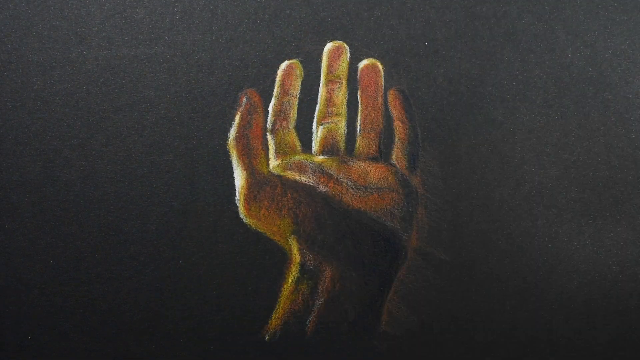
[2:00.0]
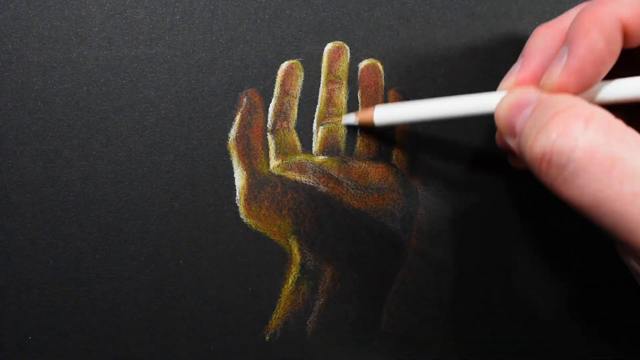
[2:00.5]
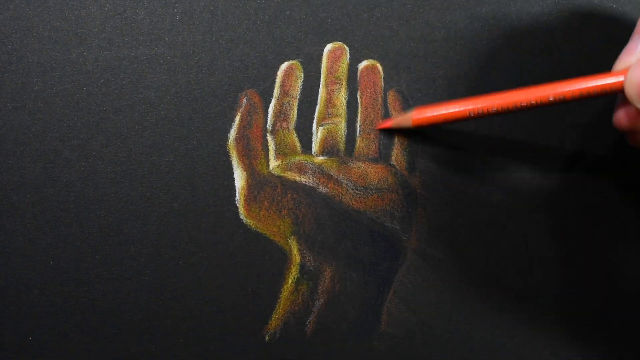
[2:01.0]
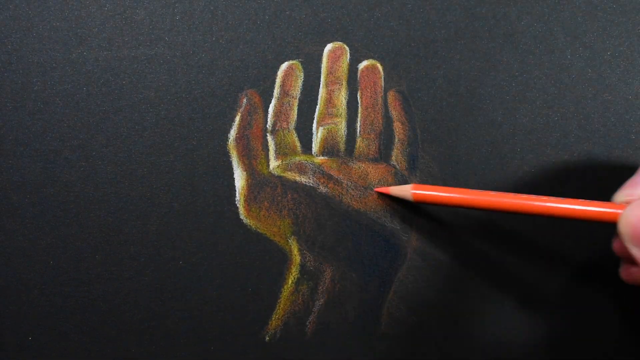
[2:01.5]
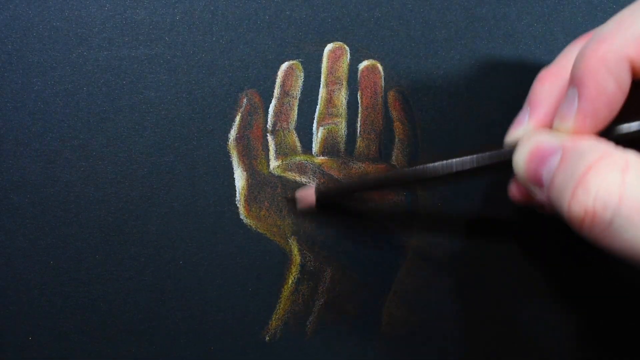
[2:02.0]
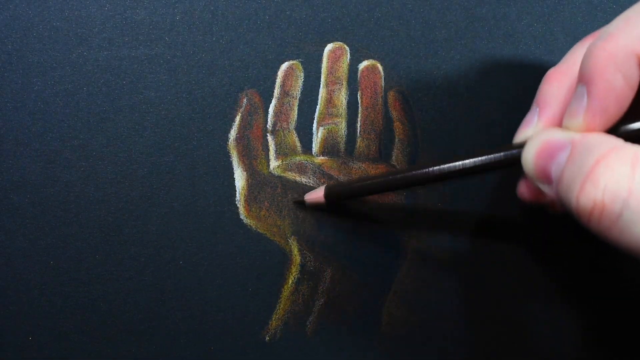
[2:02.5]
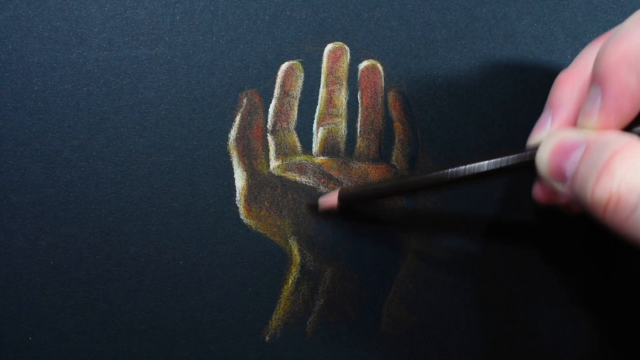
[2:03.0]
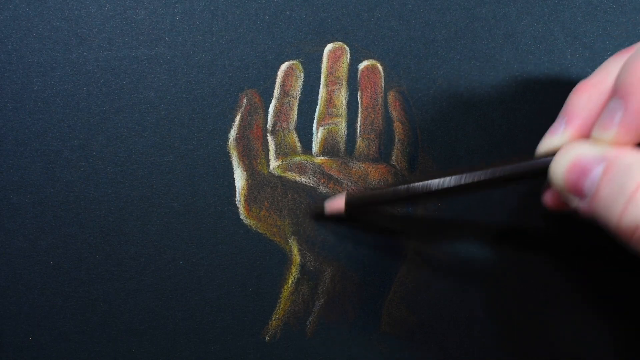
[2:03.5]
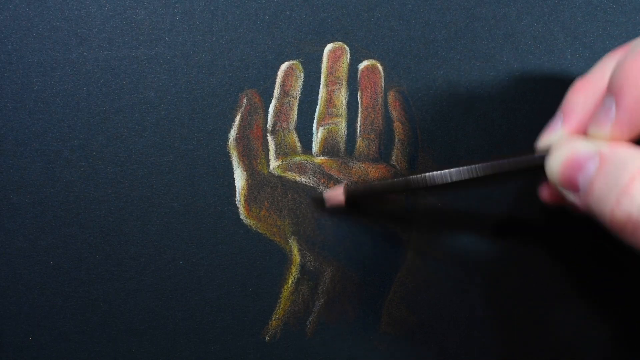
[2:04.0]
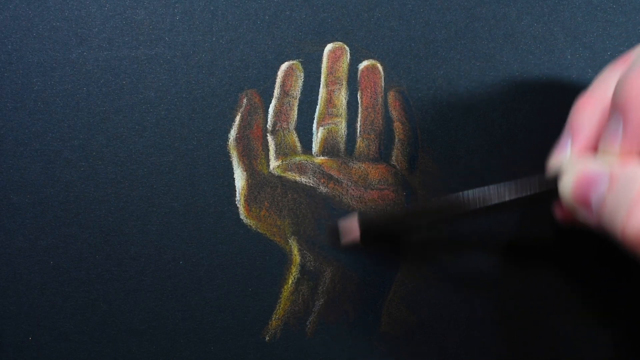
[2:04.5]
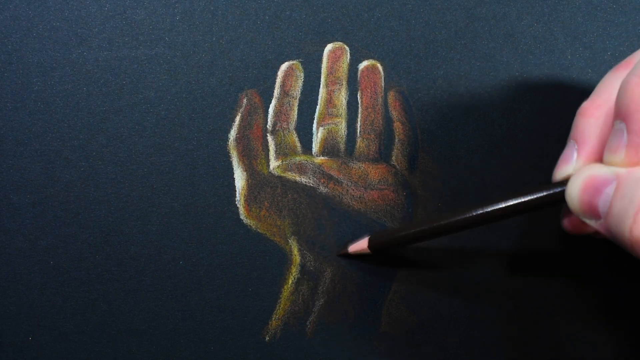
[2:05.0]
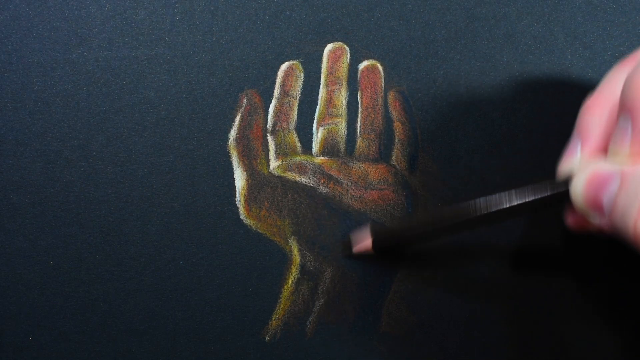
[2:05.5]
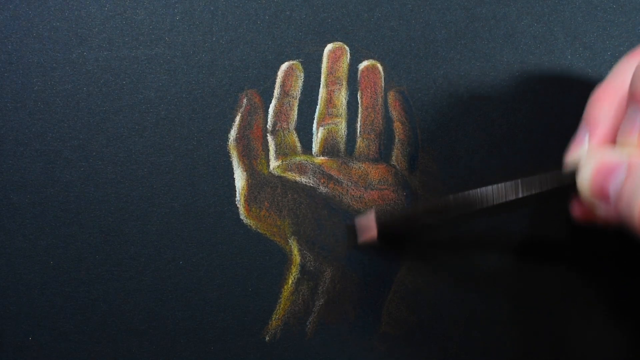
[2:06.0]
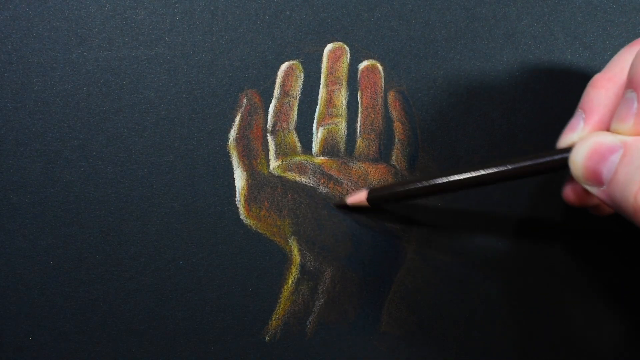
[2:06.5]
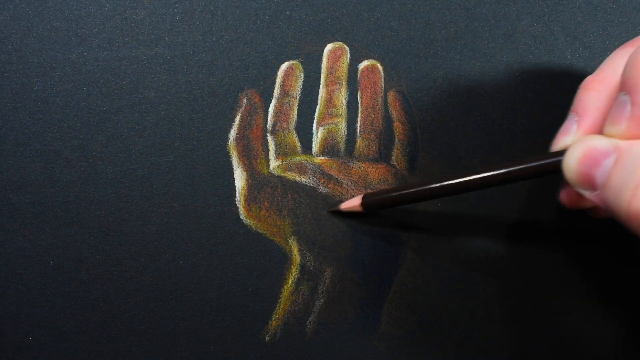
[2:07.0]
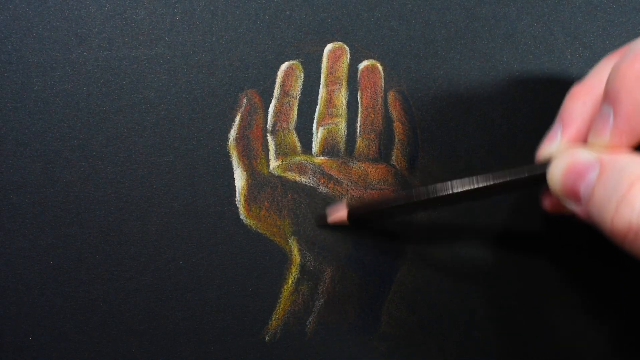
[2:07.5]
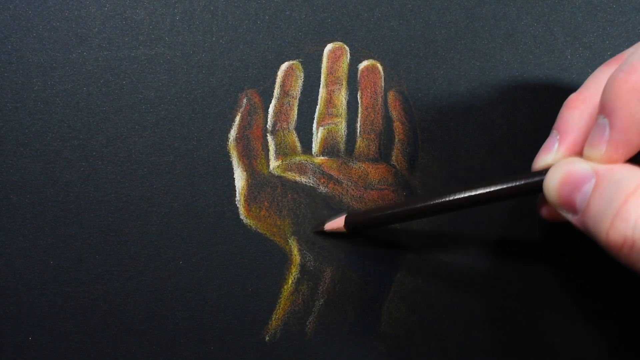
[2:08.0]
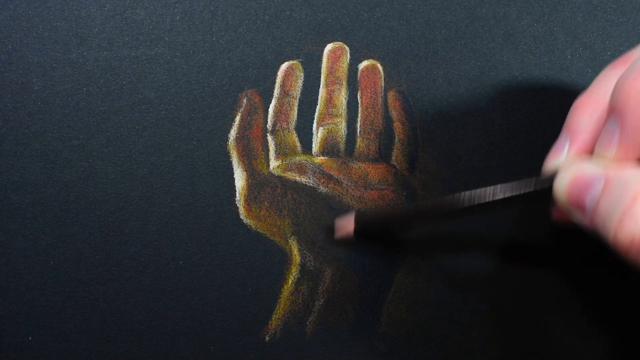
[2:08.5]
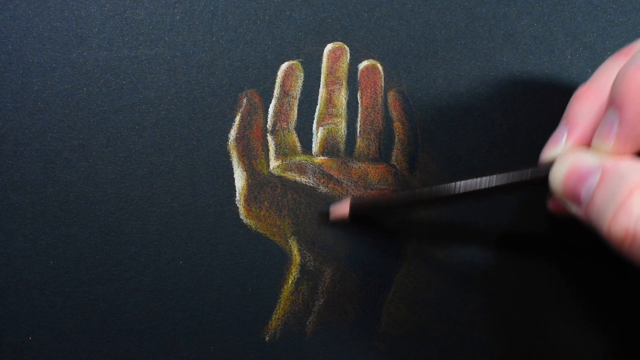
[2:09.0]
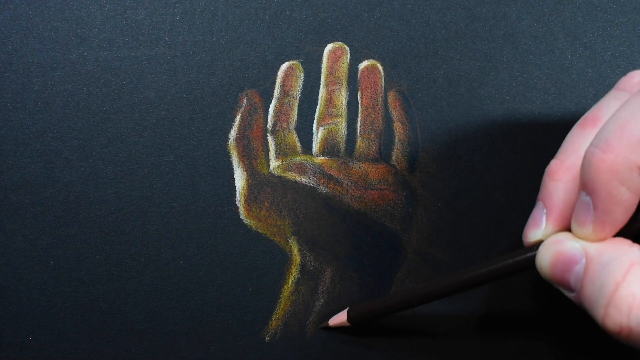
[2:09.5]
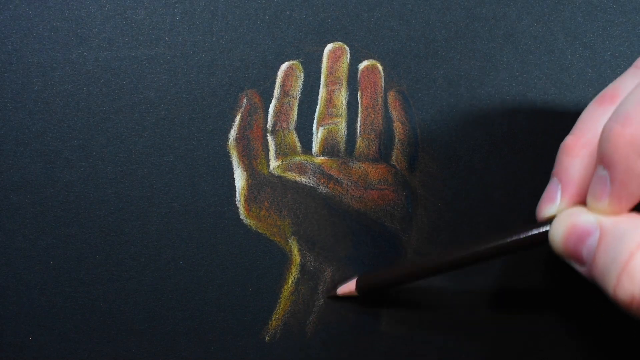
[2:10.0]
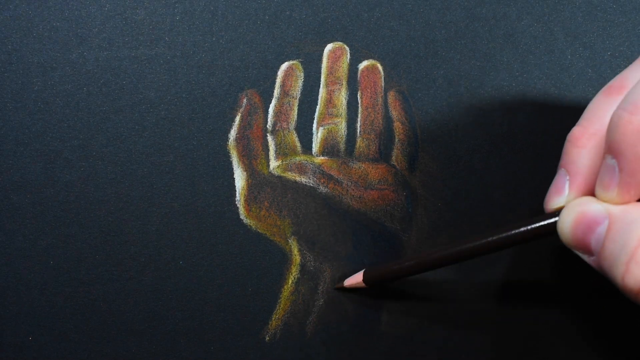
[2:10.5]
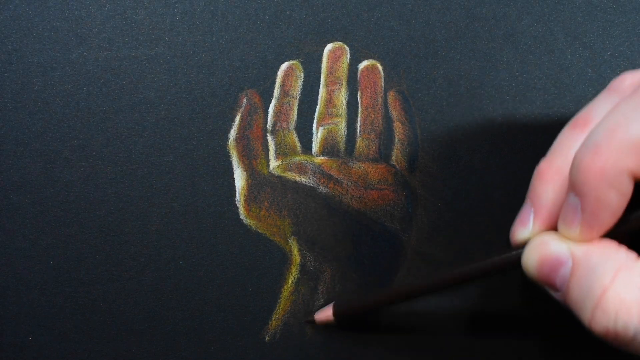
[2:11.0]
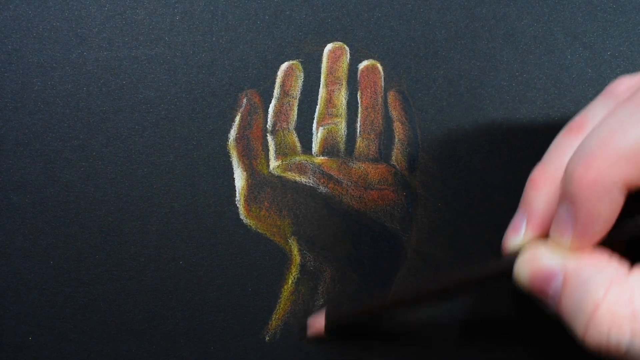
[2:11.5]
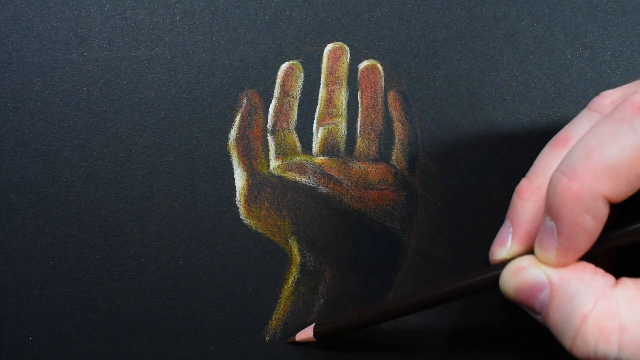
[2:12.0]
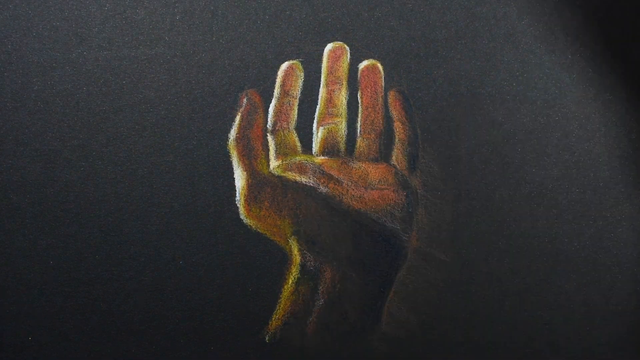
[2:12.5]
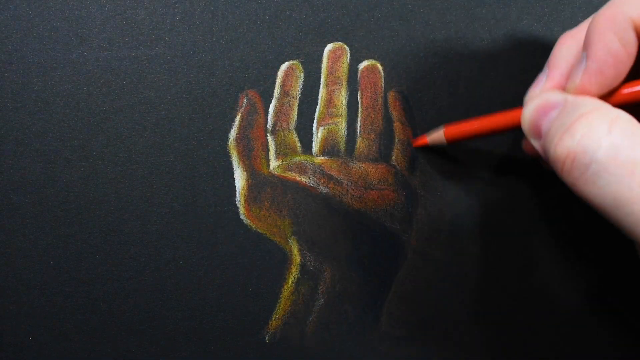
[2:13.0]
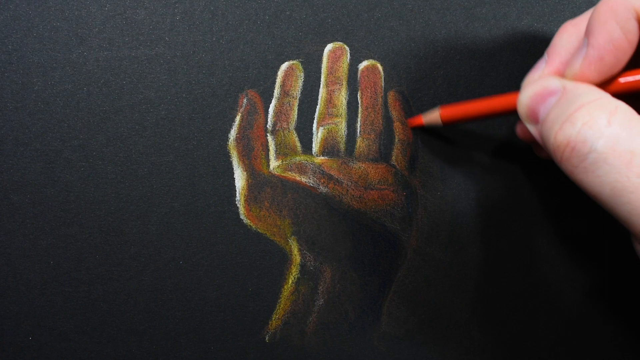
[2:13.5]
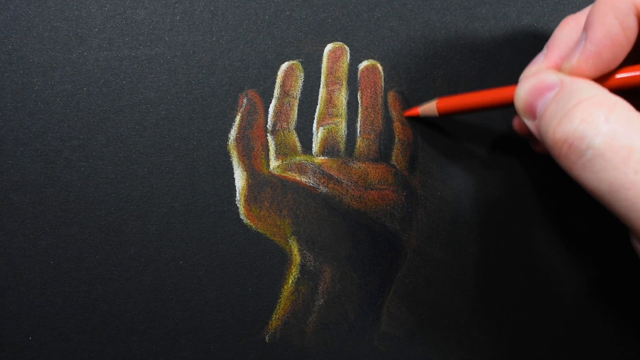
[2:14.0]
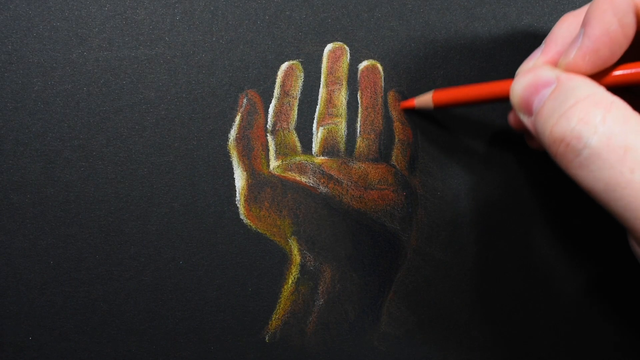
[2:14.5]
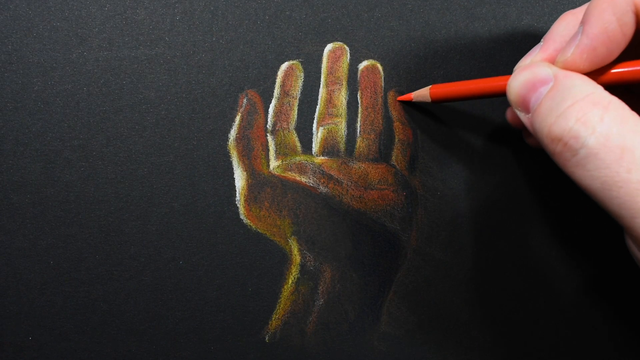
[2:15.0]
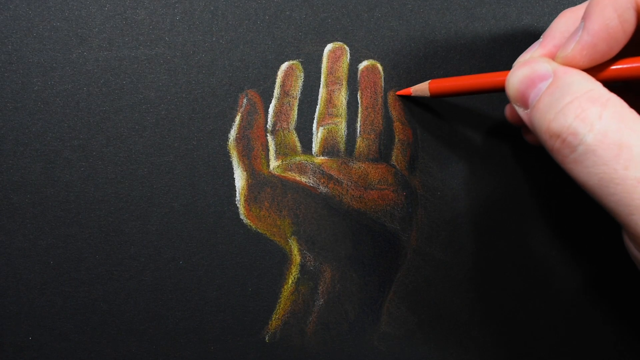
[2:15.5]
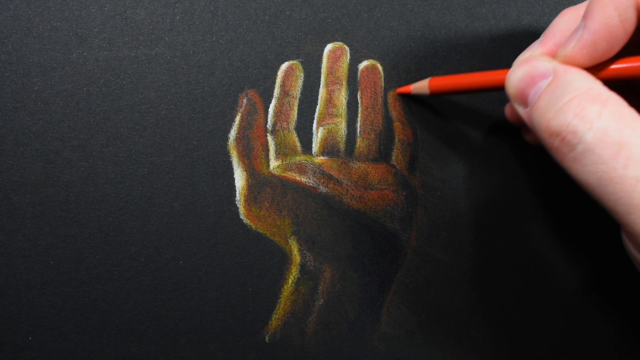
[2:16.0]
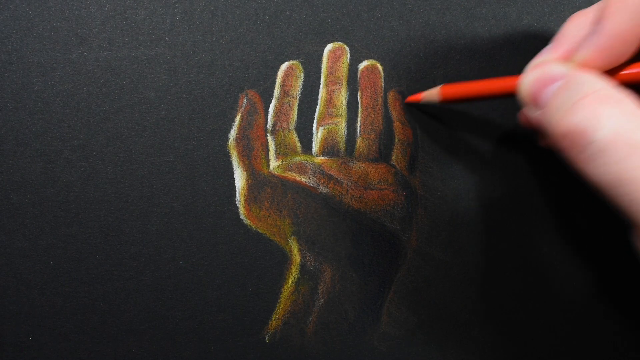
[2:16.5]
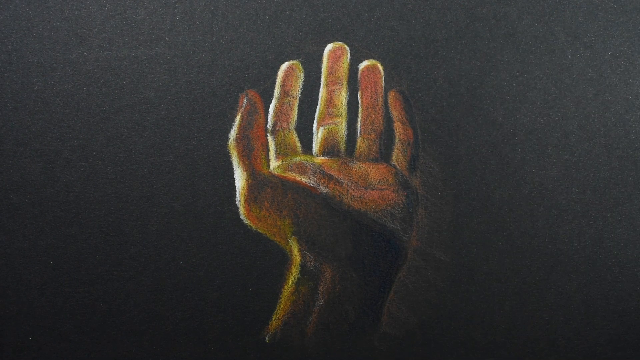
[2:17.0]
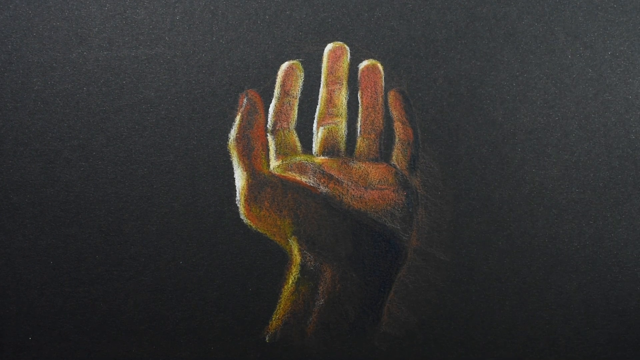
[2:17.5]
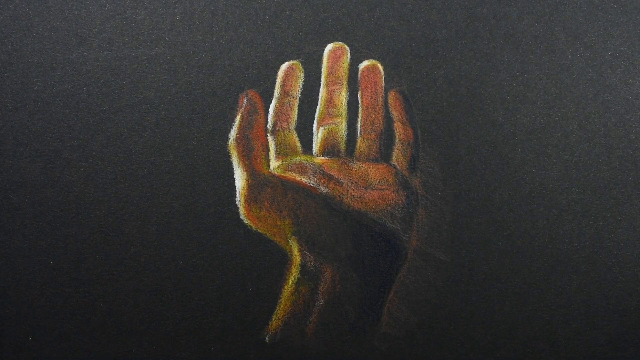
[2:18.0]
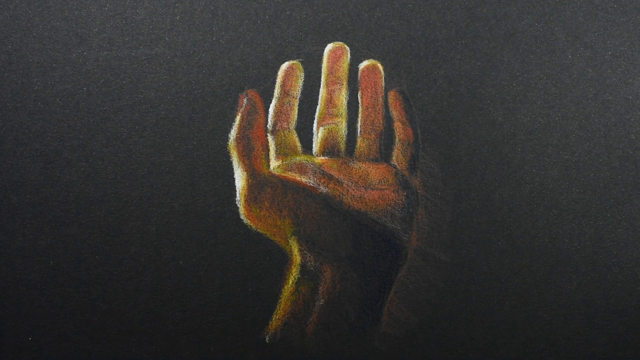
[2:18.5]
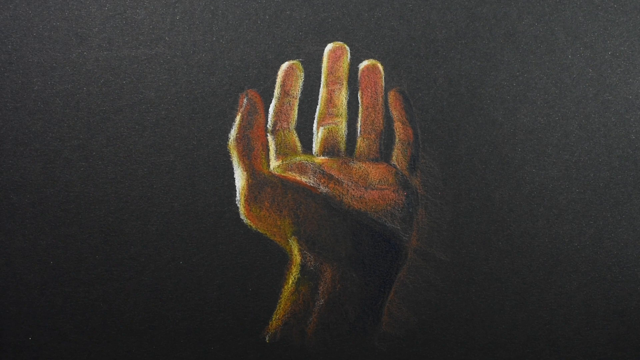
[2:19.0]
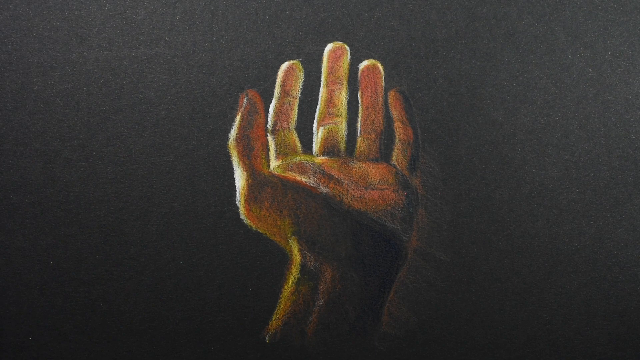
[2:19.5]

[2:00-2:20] A person seems to be using a dark red pencil. He appears to be outlining a picture of a hand, shading in more detail of the fingers and the creases on the inside of the hand; the hand seems to be holding something. He adds more detail to the fingers with a bright orange pencil. The picture is drawn on a very dark background. The man then shades in the details of the fingertips with another orange pencil and a yellow pencil. The drawing is highly detailed, and he seems to be a very talented artist. There only appears to be the one person, who is doing the drawing, and there are no animals.